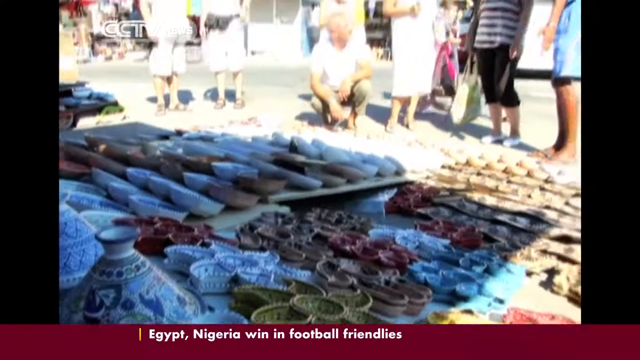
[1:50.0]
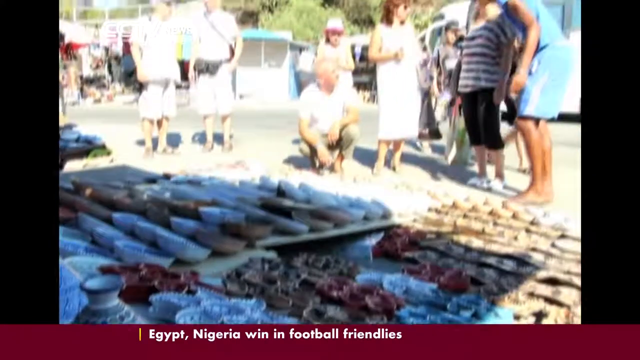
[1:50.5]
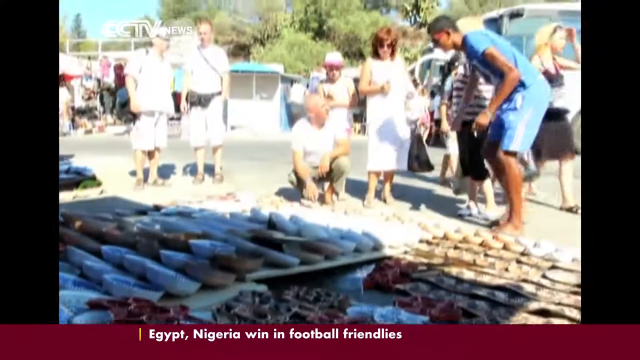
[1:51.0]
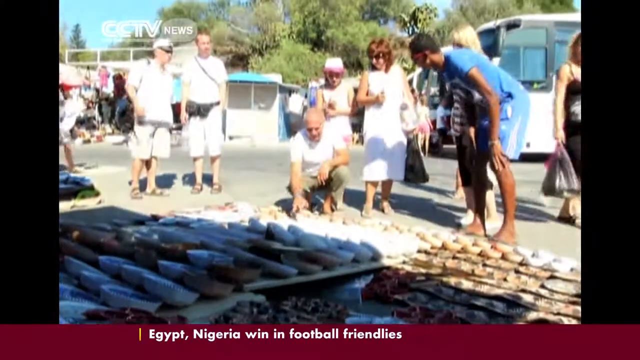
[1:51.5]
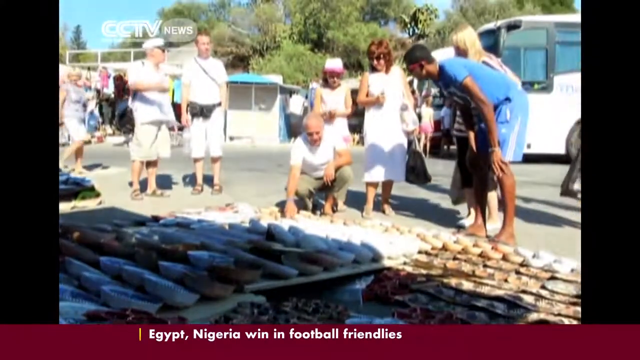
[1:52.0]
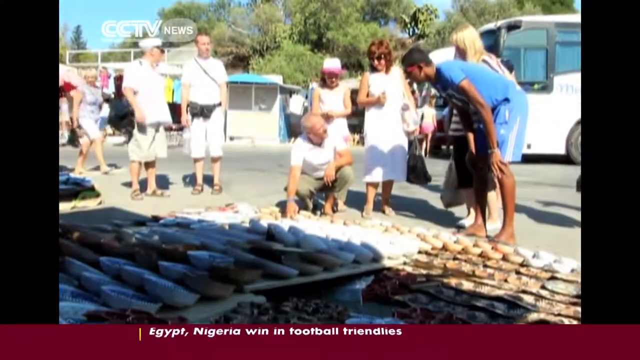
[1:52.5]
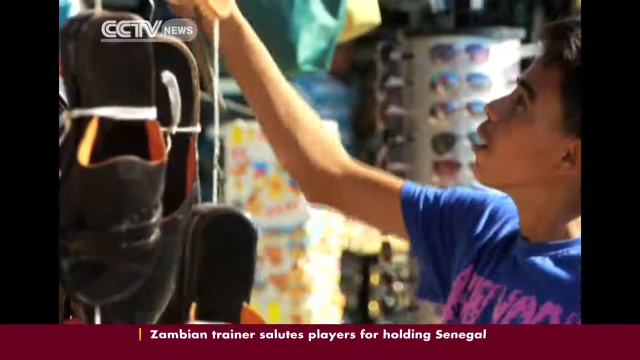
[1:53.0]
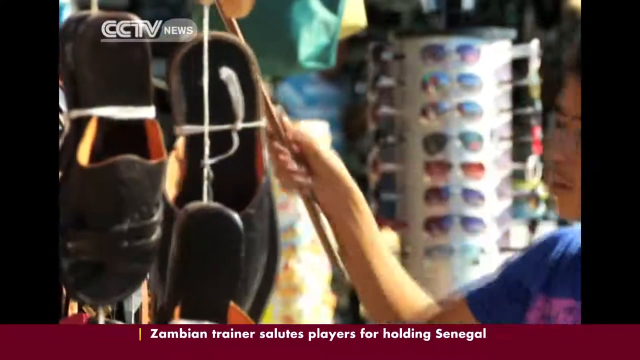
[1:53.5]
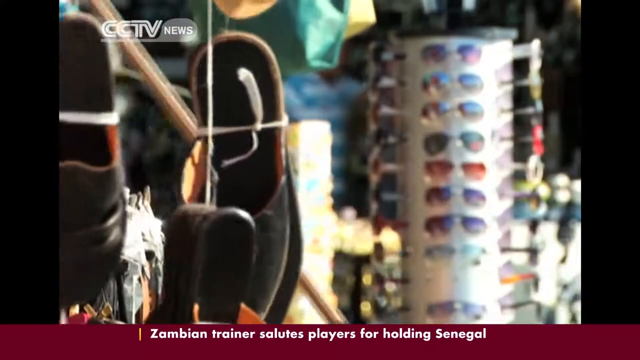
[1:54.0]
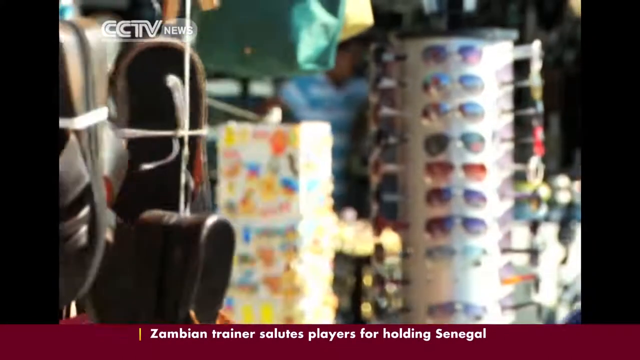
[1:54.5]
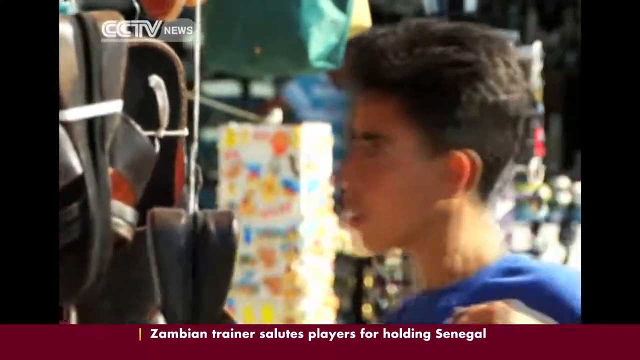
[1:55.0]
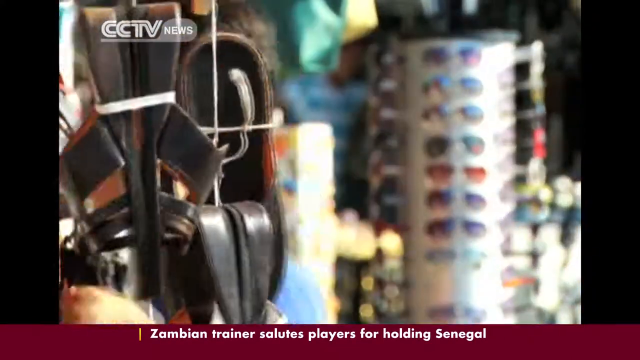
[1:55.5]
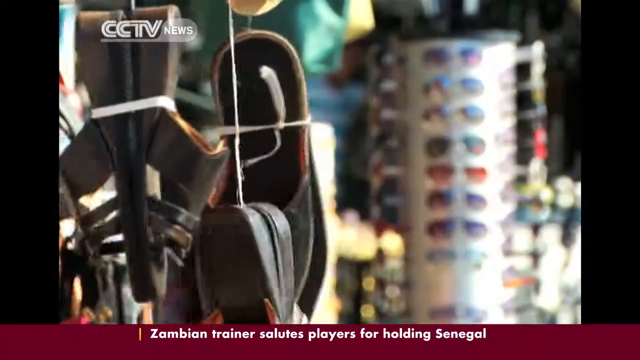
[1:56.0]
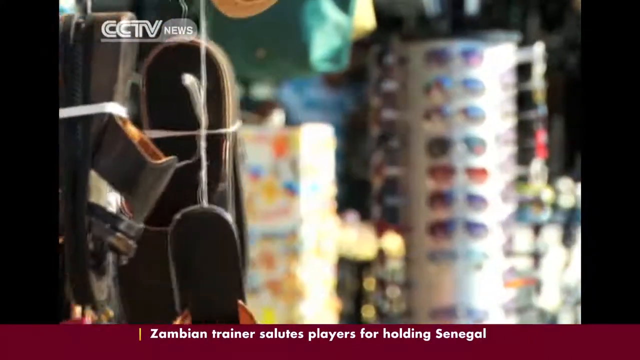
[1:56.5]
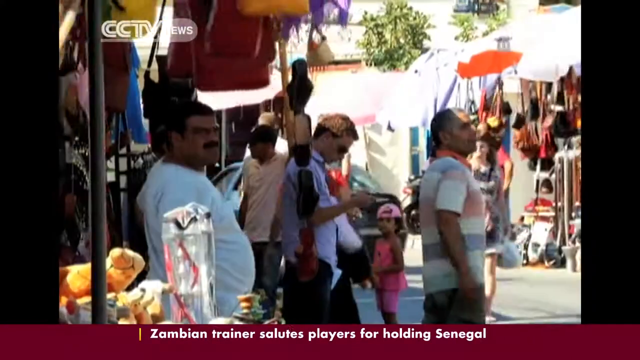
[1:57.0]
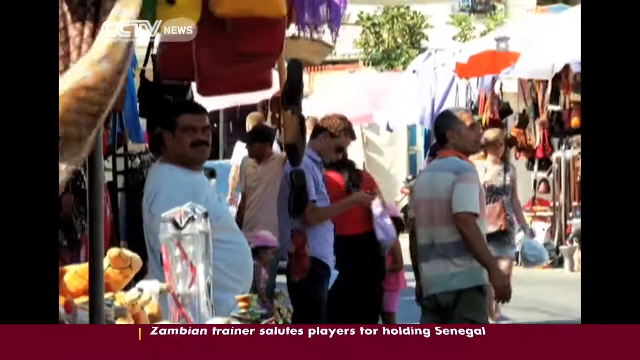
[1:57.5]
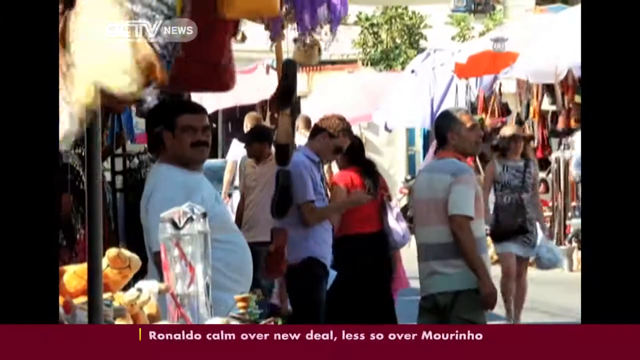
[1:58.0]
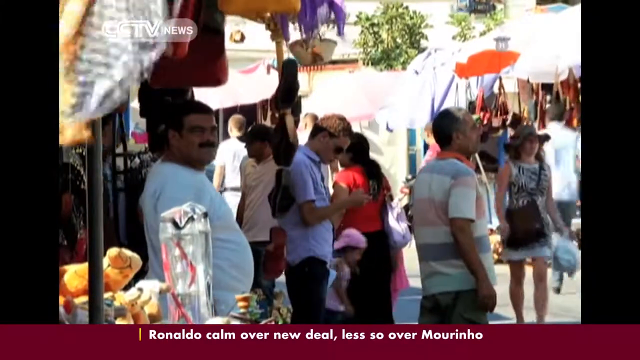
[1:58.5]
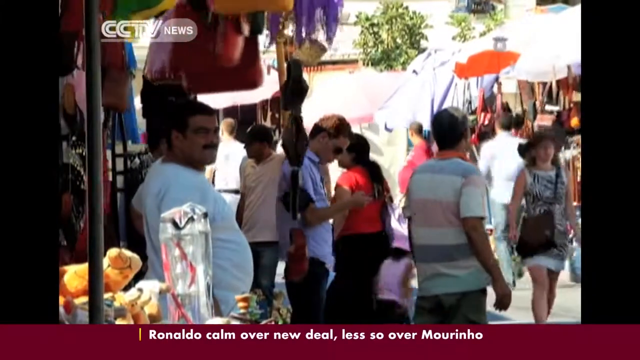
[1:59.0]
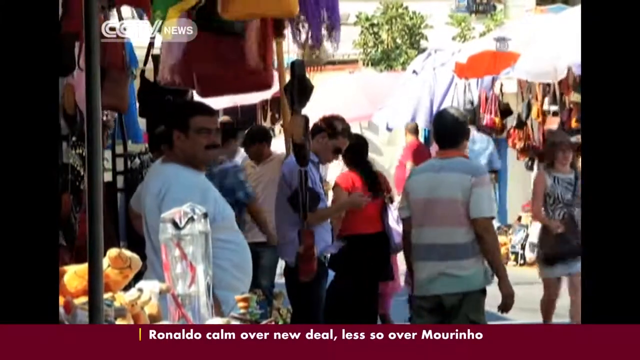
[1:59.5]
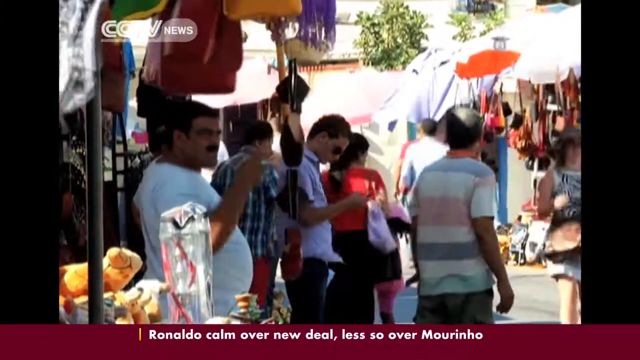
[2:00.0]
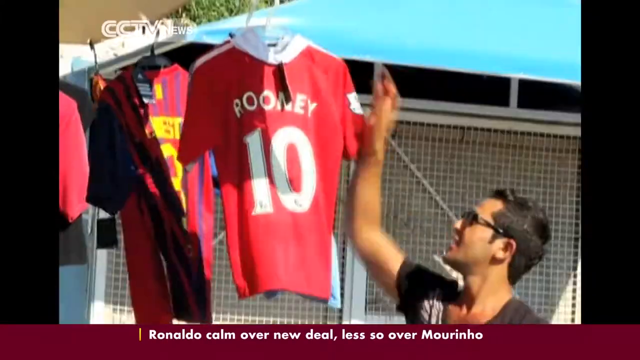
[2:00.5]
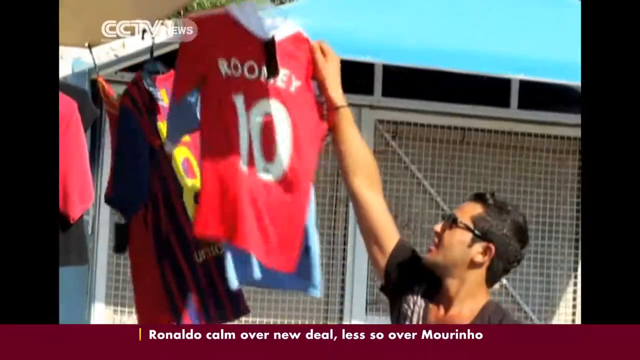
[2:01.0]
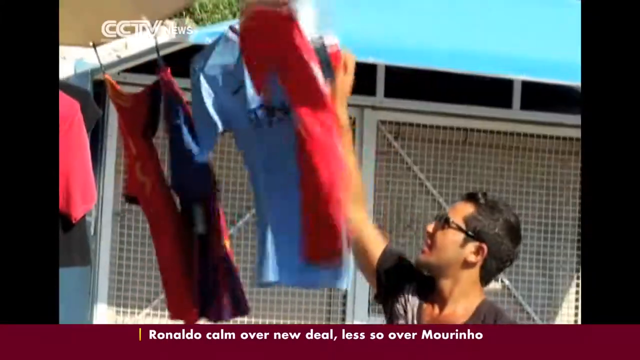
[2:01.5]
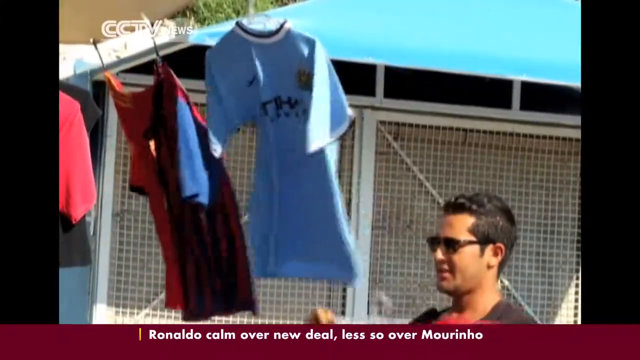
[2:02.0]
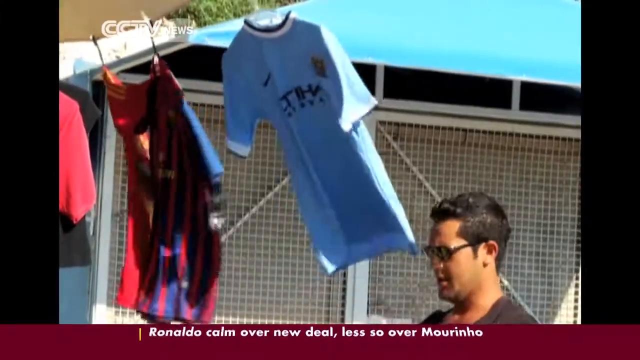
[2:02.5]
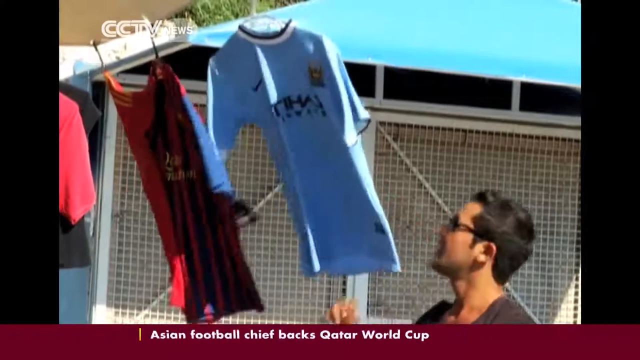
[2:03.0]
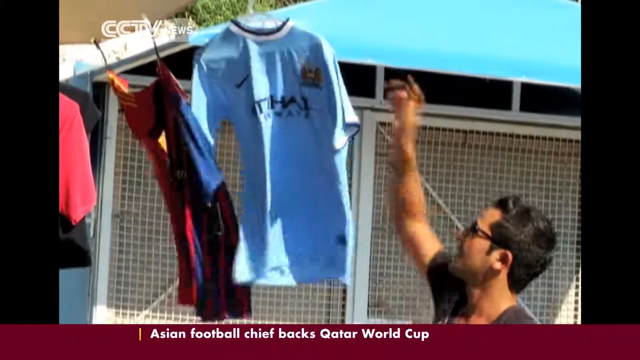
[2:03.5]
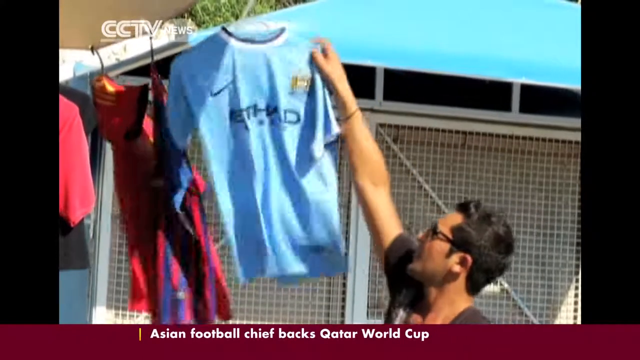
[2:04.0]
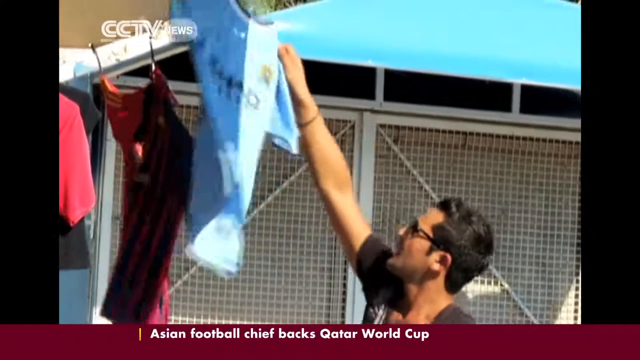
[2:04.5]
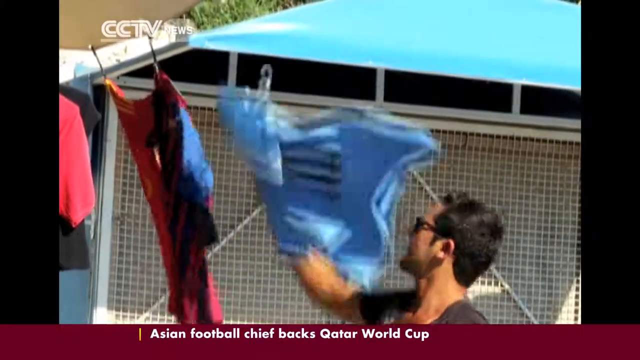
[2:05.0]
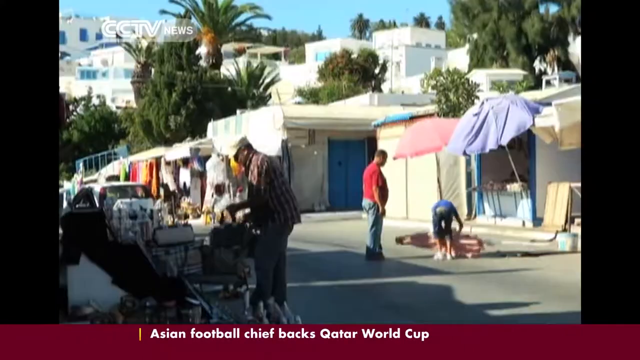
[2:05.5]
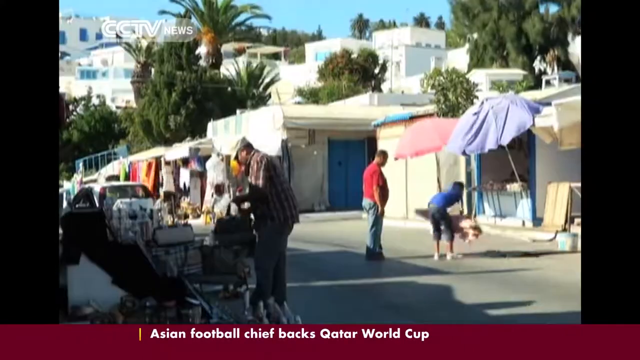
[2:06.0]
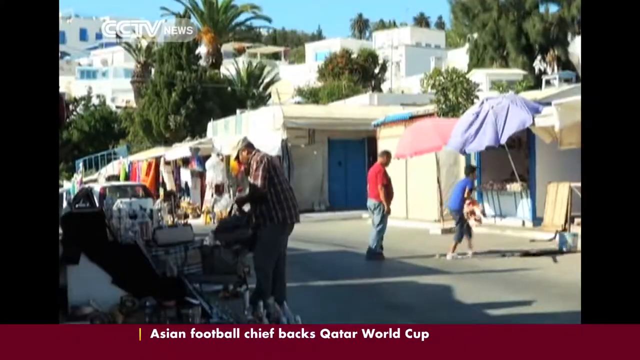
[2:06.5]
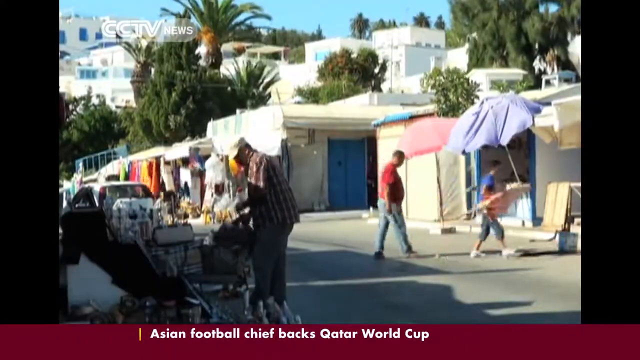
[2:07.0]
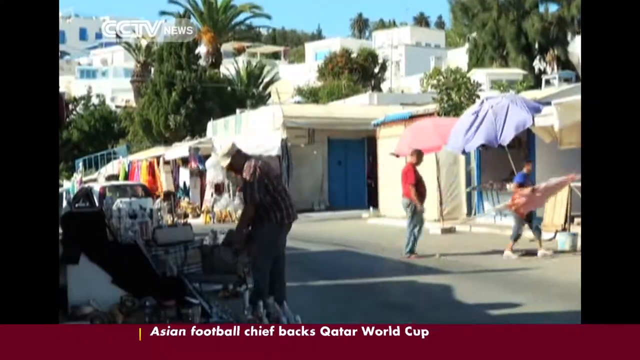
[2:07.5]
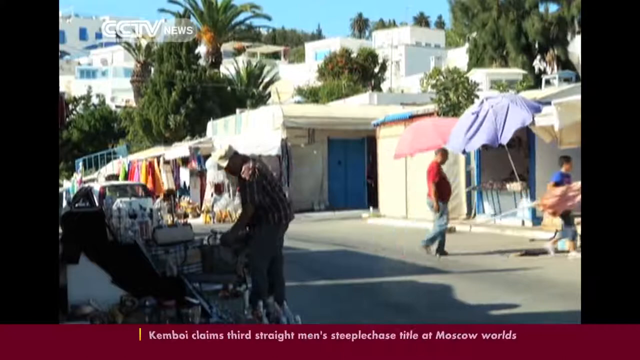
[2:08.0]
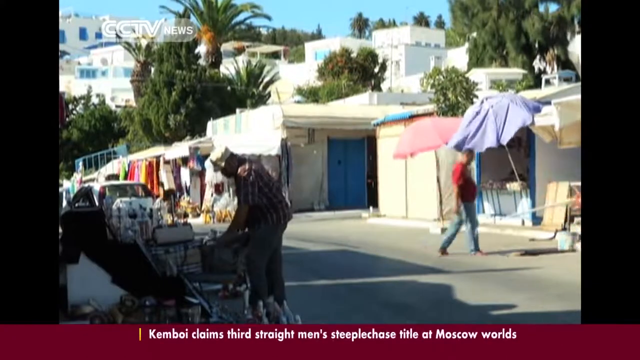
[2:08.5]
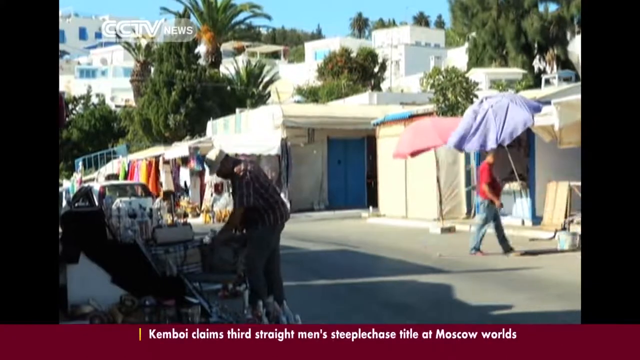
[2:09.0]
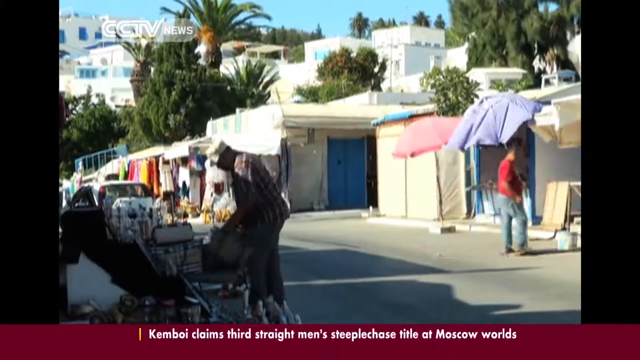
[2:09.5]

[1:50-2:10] As the tourists look at the china and pottery on the floor, one tourist crouches down and points at it, with his family members standing next to him and more tourists in shorts and sandals off to the left, on a bright sunny day. What appears to be the vendor owner, in an all-blue outfit, stands next to him, bending over to listen and see what he is pointing at. A cut shows a close-up of a market stall with what appear to be leather sandals and shoes tied together in pairs and sunglasses on a revolving display, while a young man who looks local, working at the stand, uses a long stick with a hook on the end to bring down something displayed up high. A static shot from a distance then shows many market vendors standing on a bright, sunny, breezy day, the items hanging in their stalls blowing in the wind; the vendors stand kind of looking in the same direction as tourists in hats walk along the street. Another vendor brings down a Manchester United Wayne Rooney football jersey next to a Manchester City jersey on display, along with an FC Barcelona jersey, as somebody buys them. A final static shot shows a market street with white villas in the background, where it looks like the vendors are packing up for the day: some stalls are already closed and zipped up, umbrellas are being closed down, and one vendor packs his goods away.